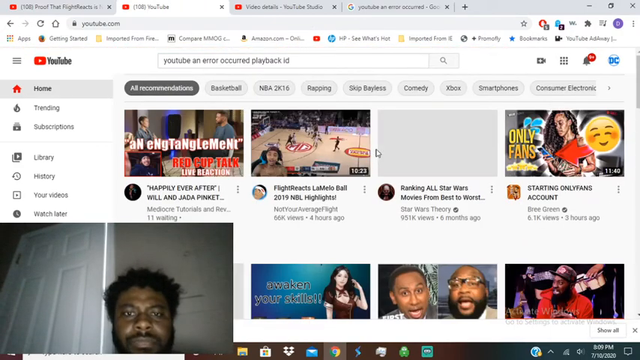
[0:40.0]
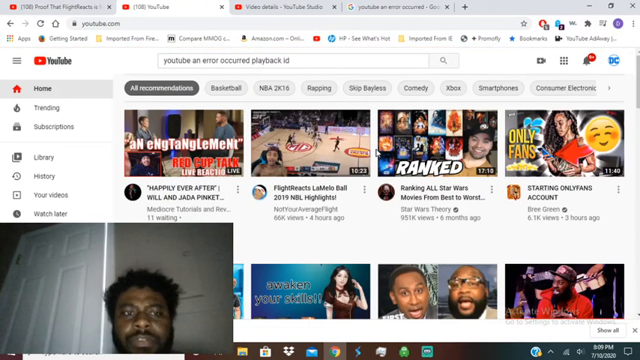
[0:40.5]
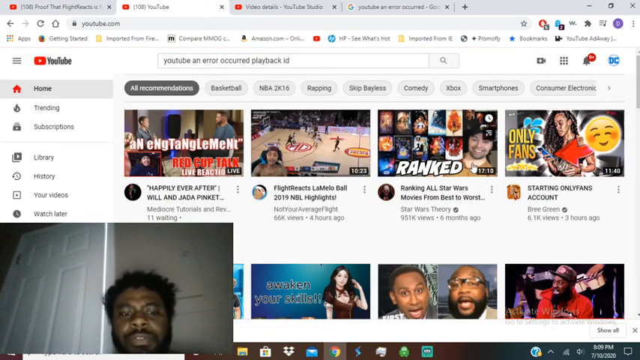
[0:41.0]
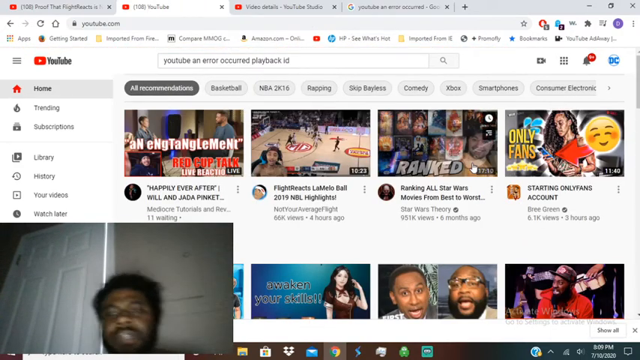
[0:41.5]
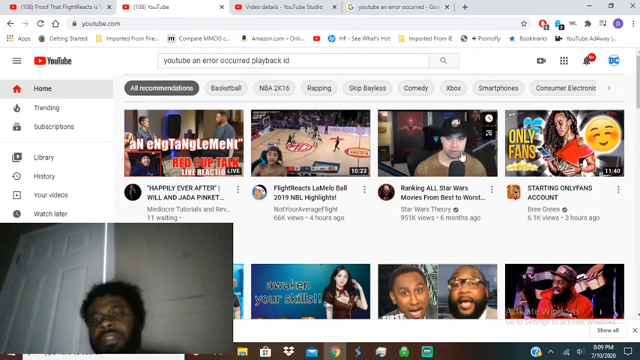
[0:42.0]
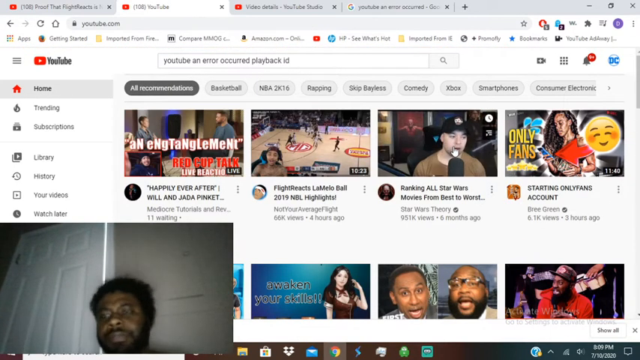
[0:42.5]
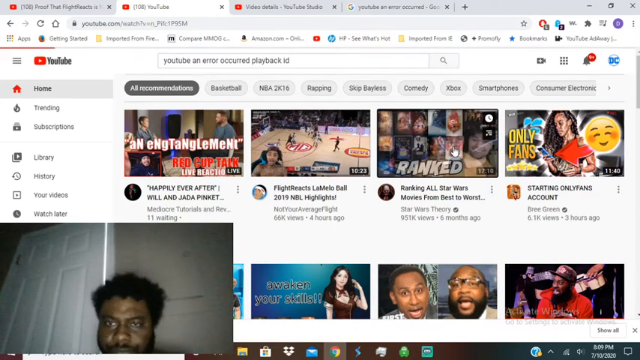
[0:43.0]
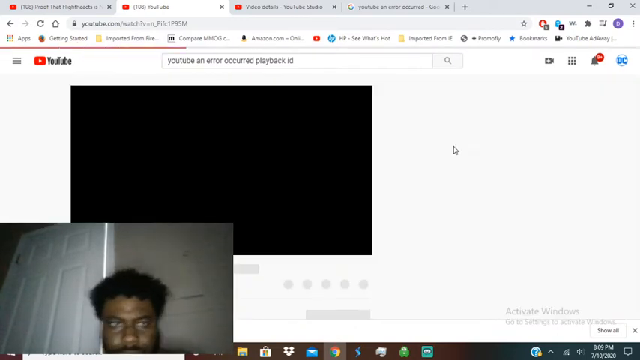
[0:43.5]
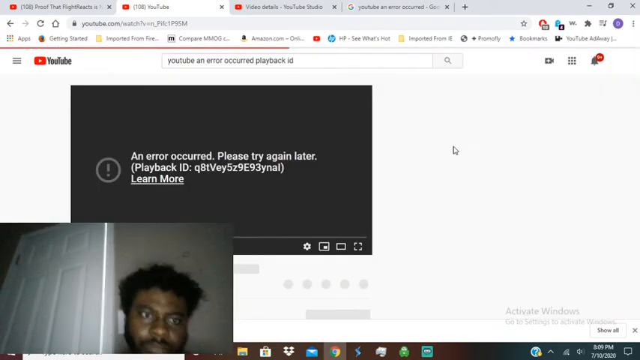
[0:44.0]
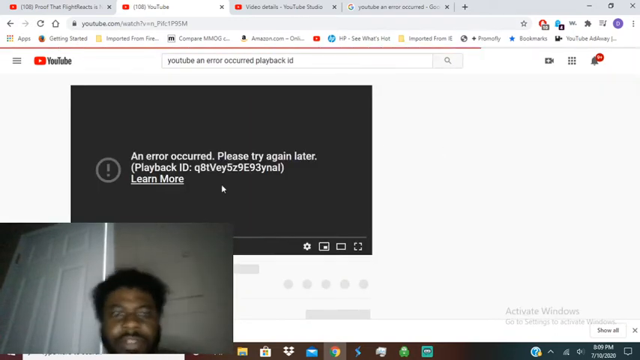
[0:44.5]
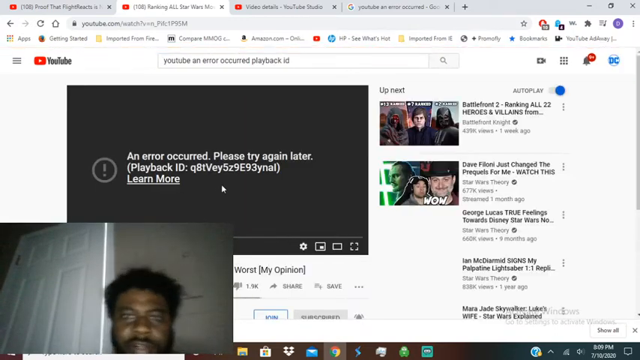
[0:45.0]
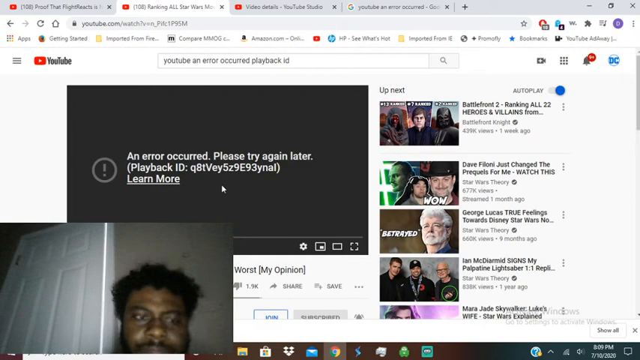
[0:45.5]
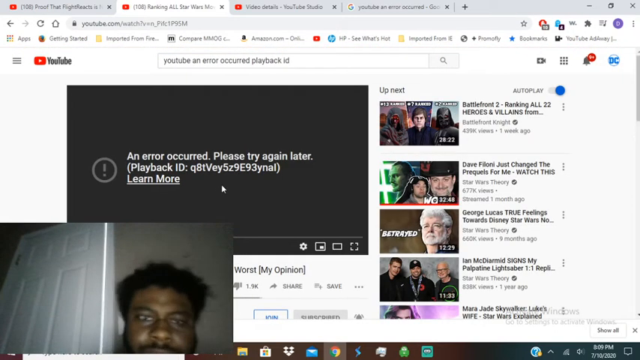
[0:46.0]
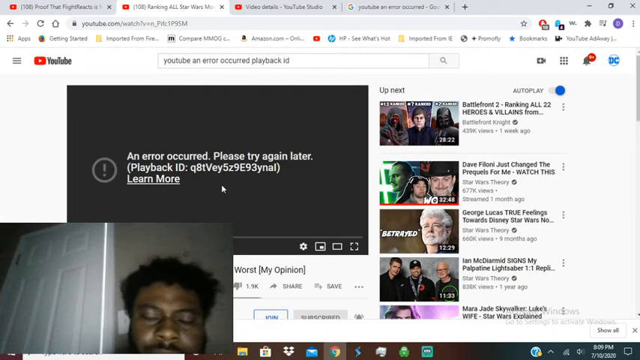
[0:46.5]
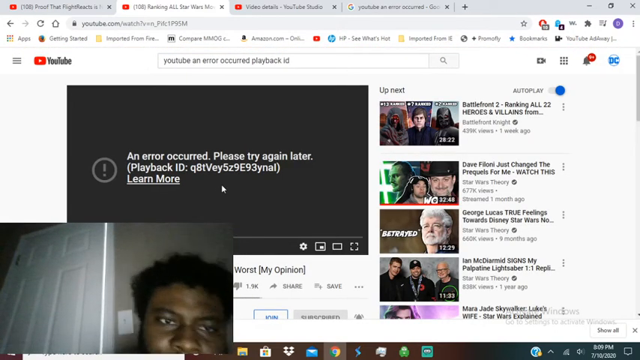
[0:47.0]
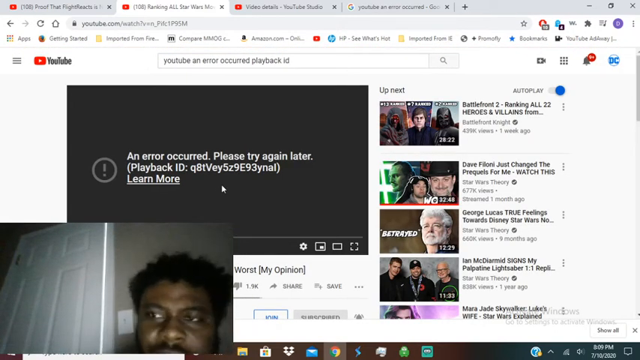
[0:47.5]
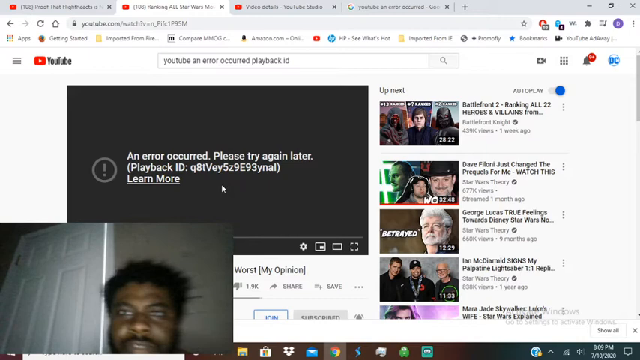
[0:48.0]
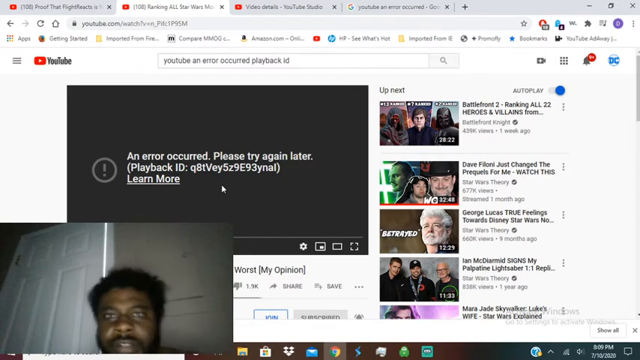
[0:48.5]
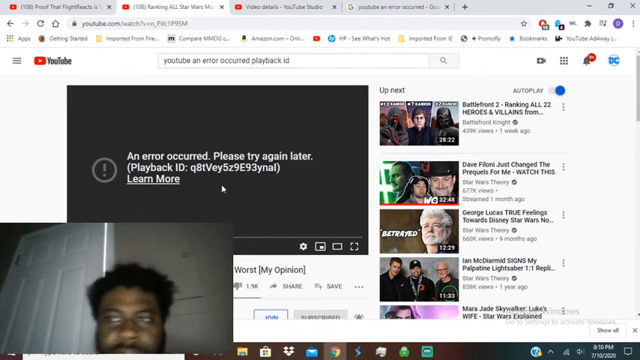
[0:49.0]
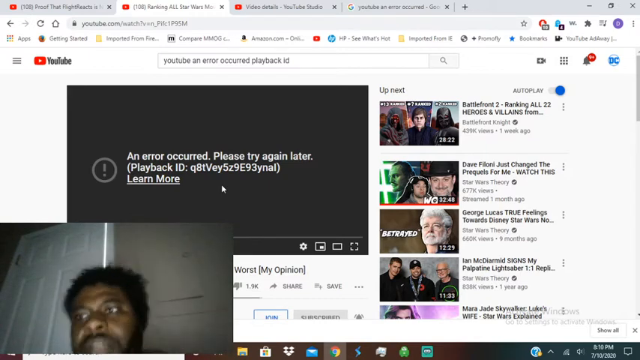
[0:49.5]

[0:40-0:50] On a PC monitor, four tabs are open; three are YouTube tabs, and the third is a Google search for YouTube an error occurred. At the bottom left is a live video of a man, with only his head visible and the camera pointing upward. He is on YouTube's home page. He sort of leans left and right as if a bit frustrated. He clicks on a video for YouTube an error occurred playback ID and gets a video informing him that there was an error and to please try again later. He sort of leans forward while talking, then sort of points, apparently to his monitor.